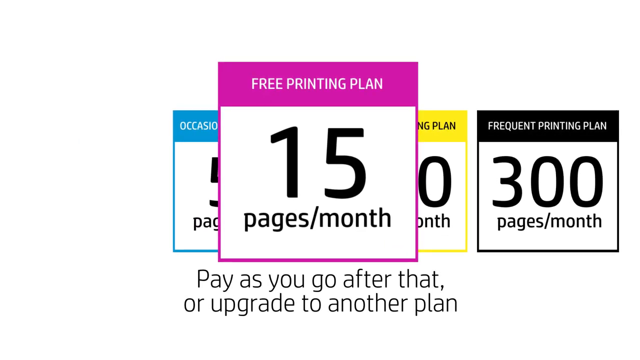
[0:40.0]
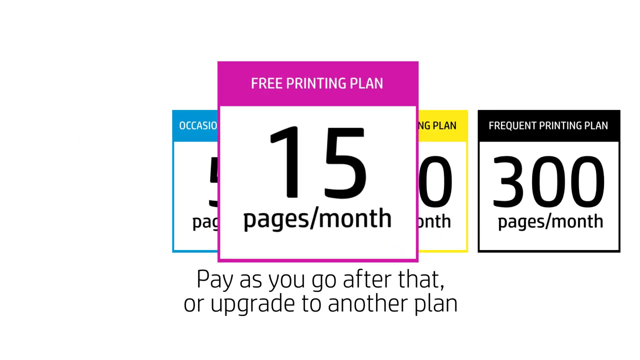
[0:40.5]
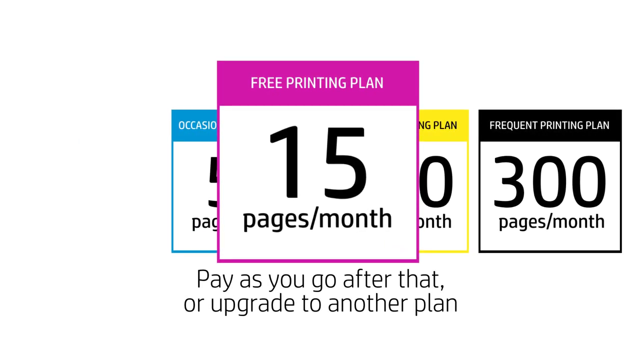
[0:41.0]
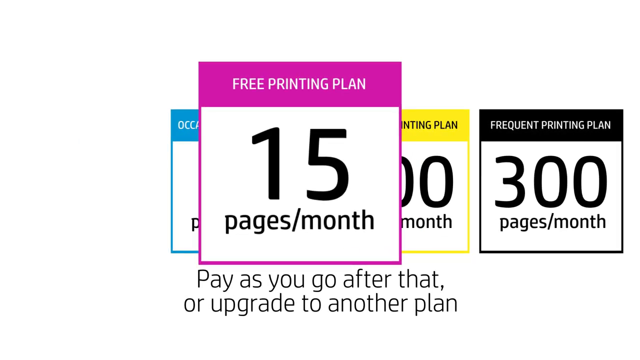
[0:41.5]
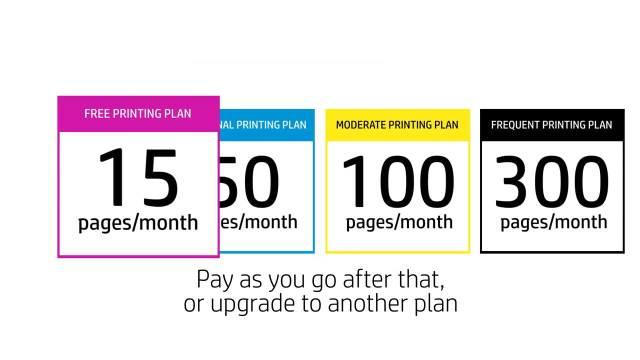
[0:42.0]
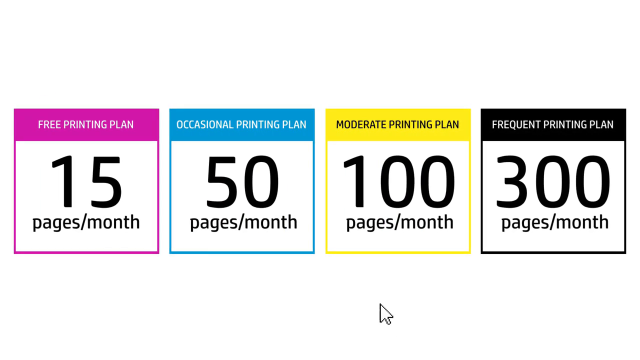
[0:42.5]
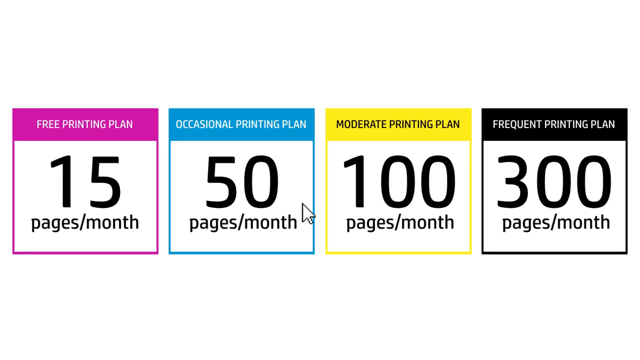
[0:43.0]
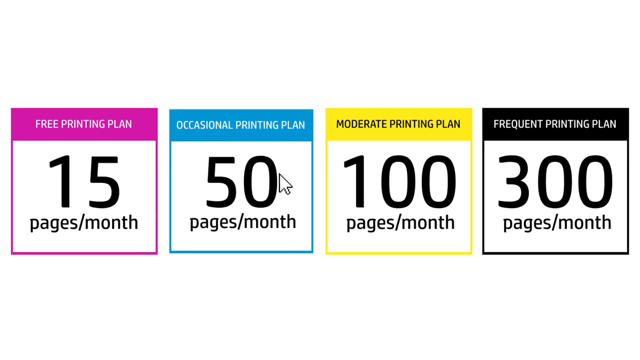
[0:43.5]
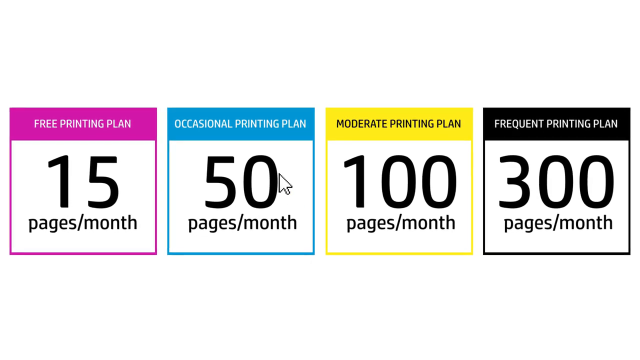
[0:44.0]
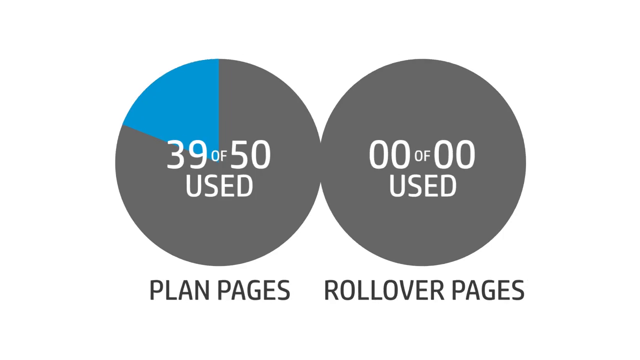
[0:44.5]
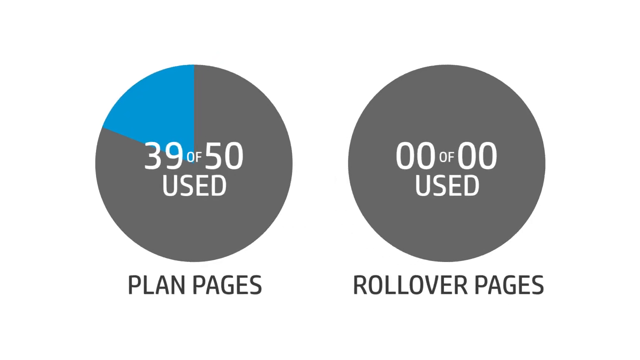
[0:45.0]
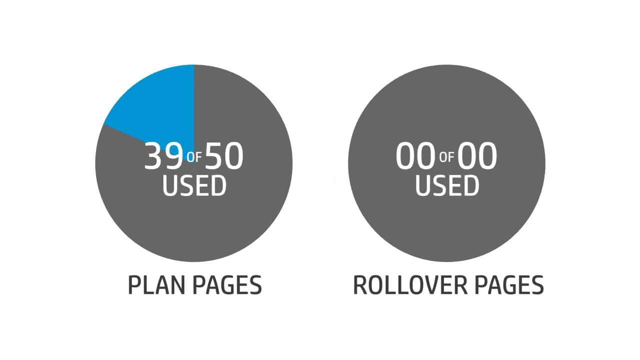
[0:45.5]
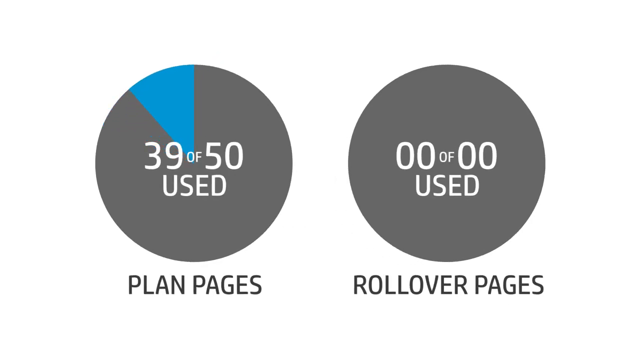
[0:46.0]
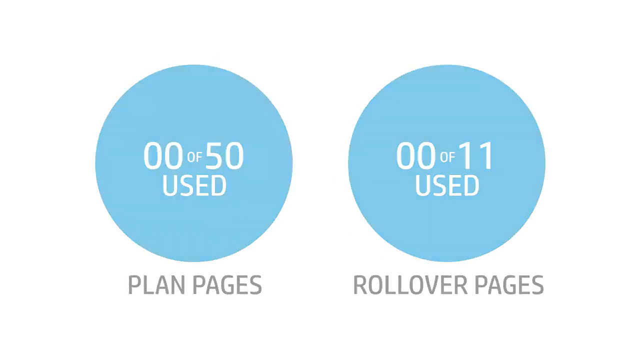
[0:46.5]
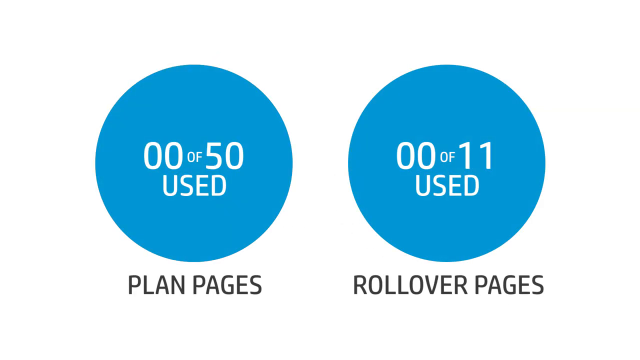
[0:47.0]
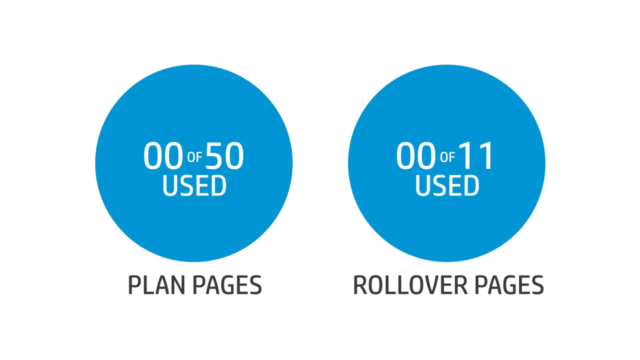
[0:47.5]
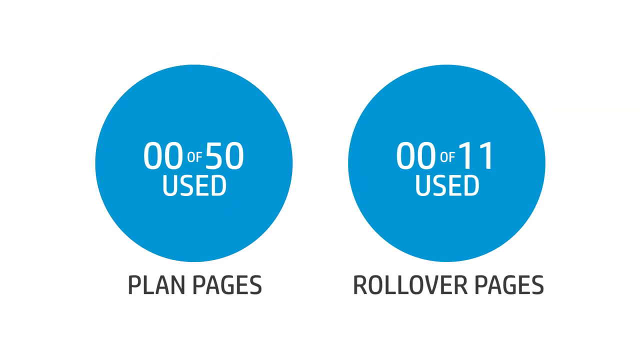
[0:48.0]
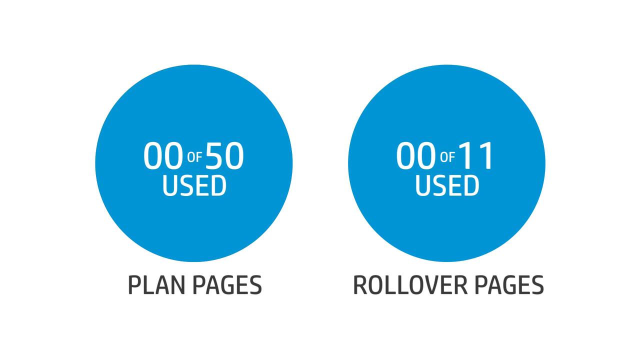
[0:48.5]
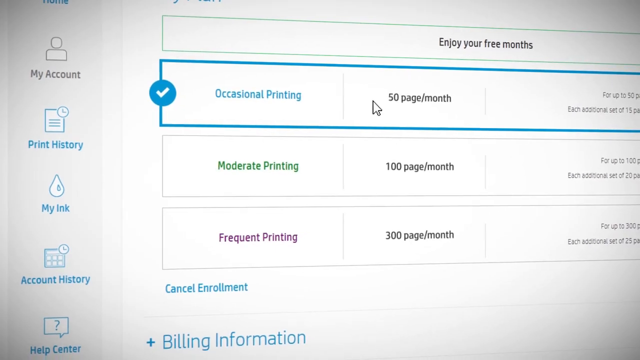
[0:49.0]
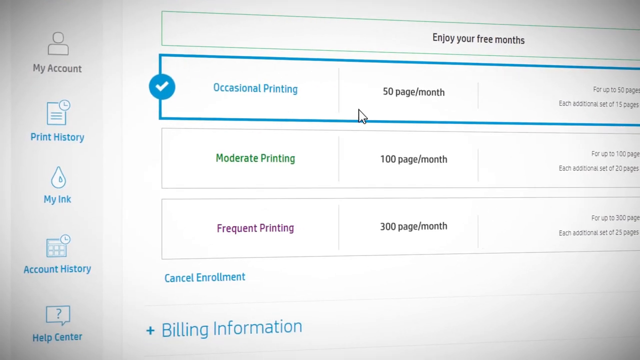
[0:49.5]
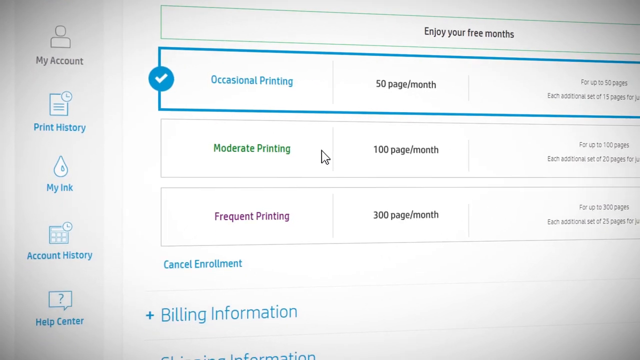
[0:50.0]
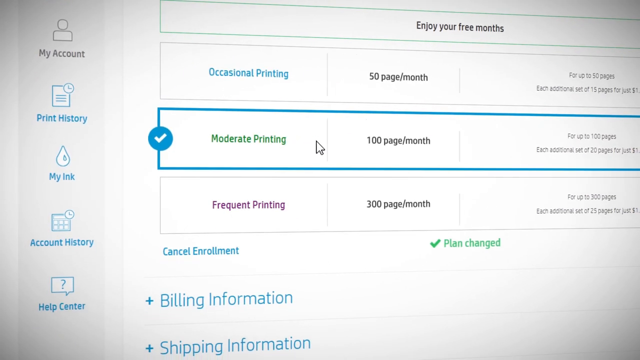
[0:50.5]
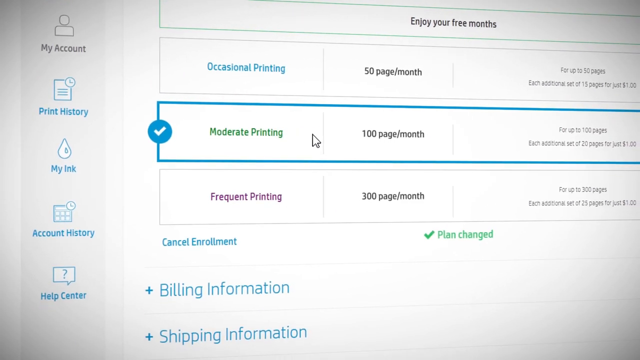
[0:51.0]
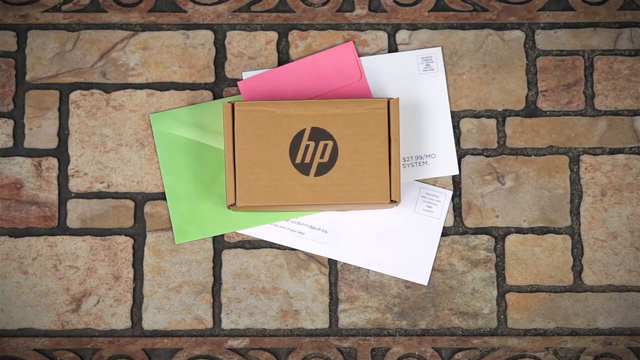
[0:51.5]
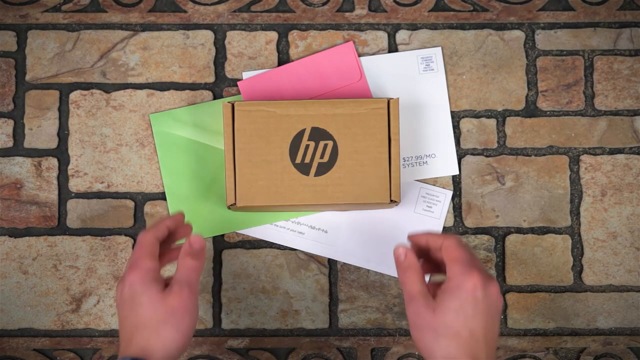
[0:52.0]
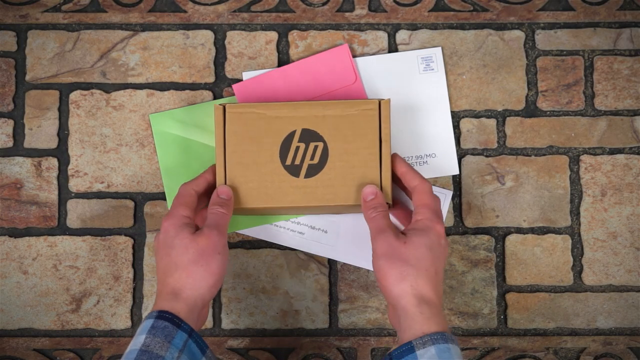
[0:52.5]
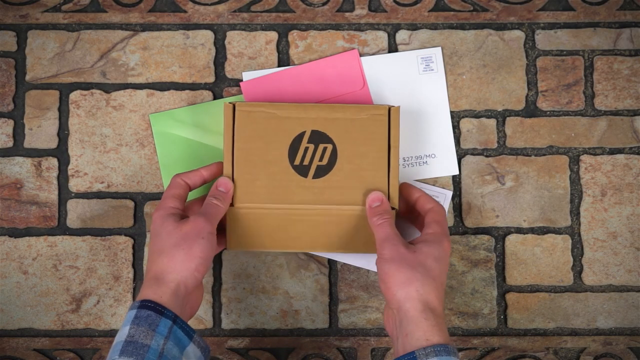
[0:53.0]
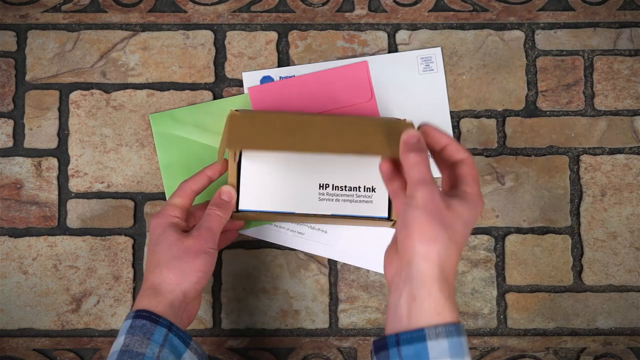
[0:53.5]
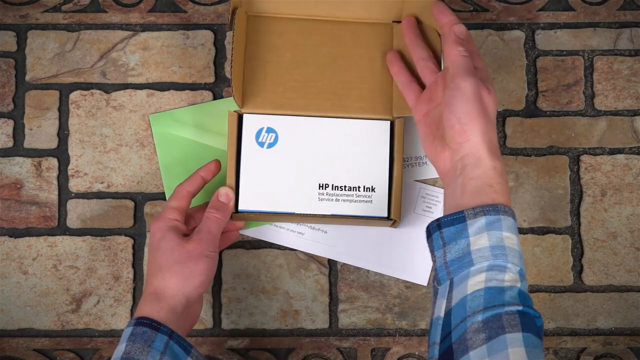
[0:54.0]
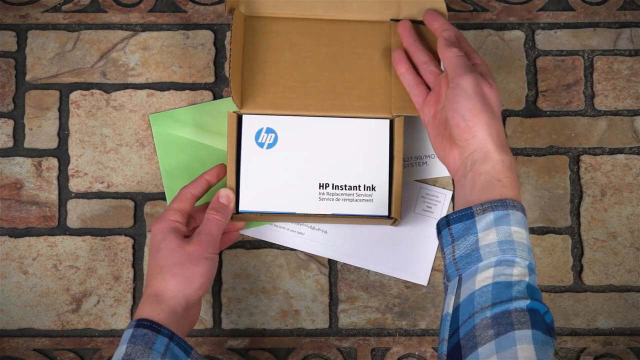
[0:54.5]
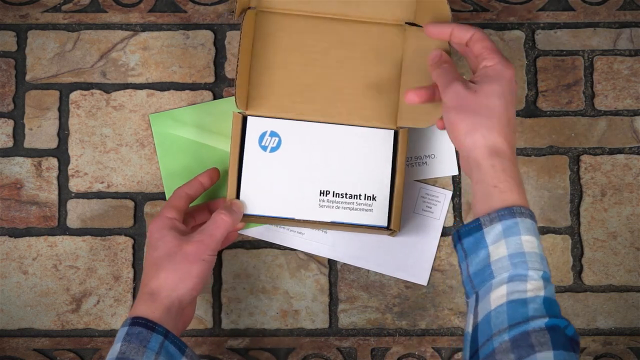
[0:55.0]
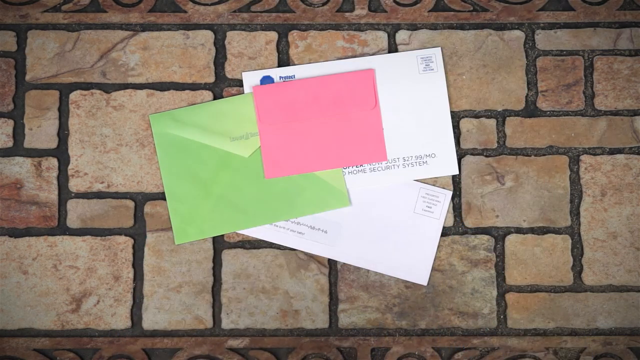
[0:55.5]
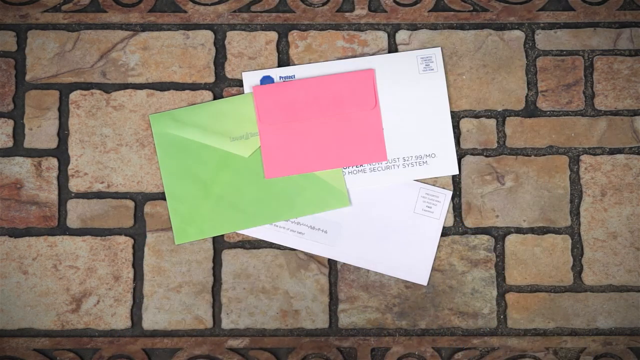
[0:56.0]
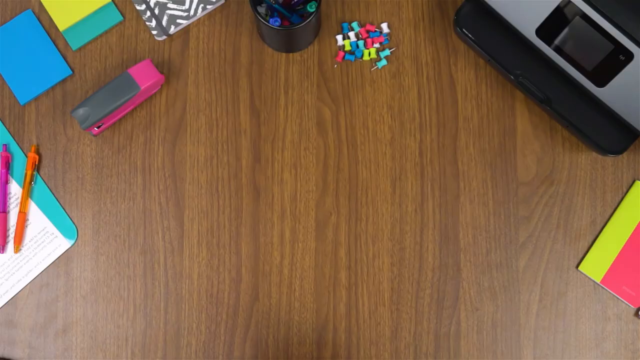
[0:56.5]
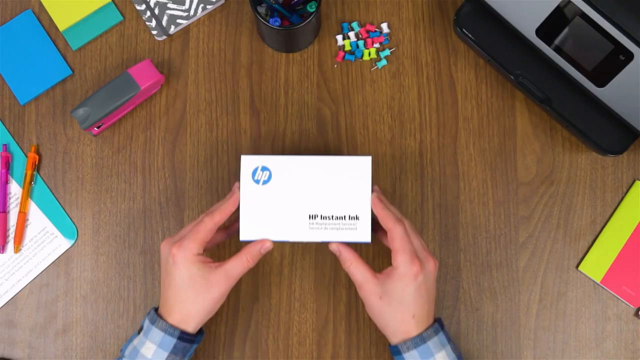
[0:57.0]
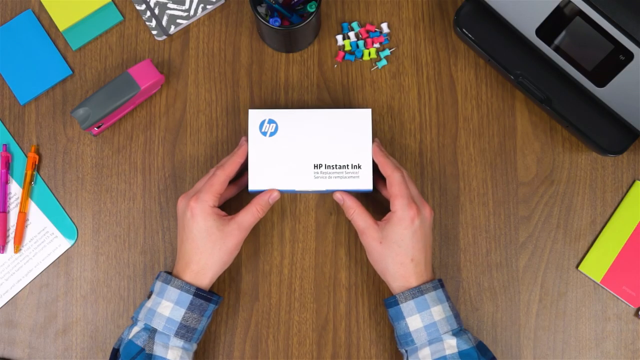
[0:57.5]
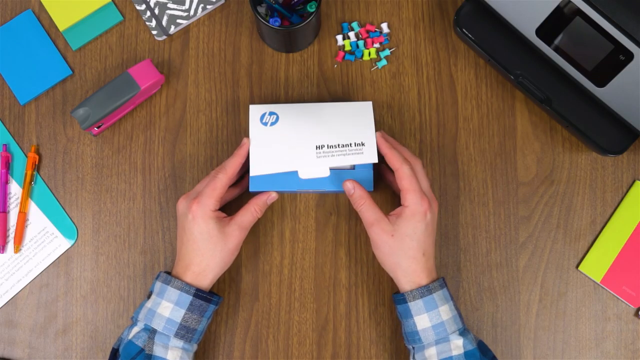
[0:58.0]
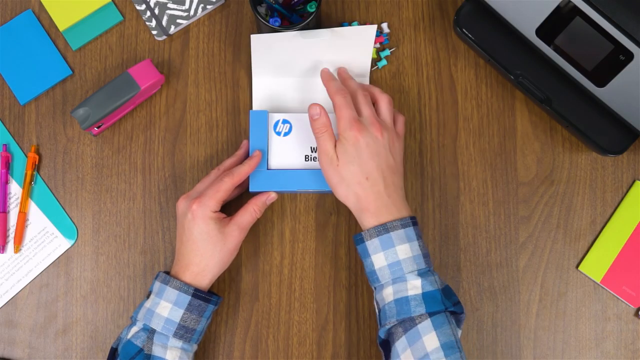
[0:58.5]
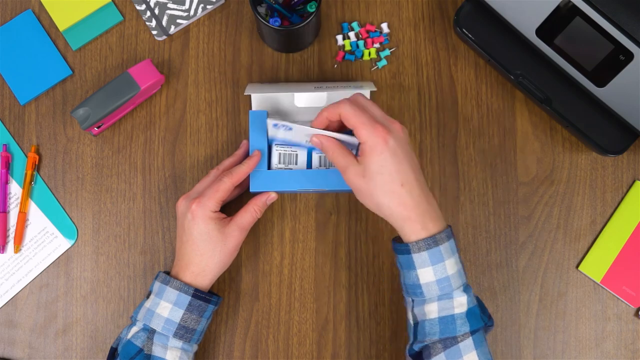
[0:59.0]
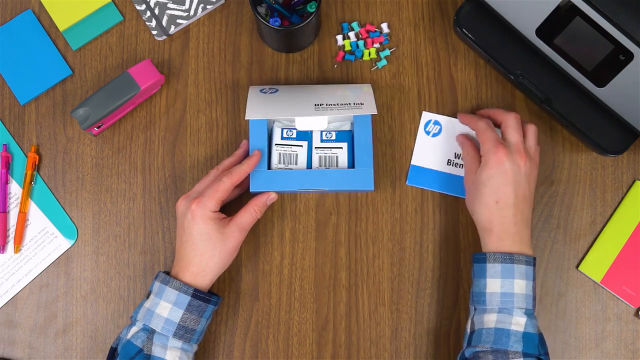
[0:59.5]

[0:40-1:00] Four printing plans are shown. The 15 pages a month plan has a pink box that is square and rectangular, the 50 pages a month plan is an occasional printing plan with a square blue box, a square yellow box represents the 100 pages a month plan, and a square black box represents the 300 pages a month plan. Each plan also has a planned number of pages and a number of pages that can be rolled over, both shown in blue circles. The video then shows a workflow of the printing schedules and goes to the desk where the printing materials are shown. The desk also has a box full of sharp pens.